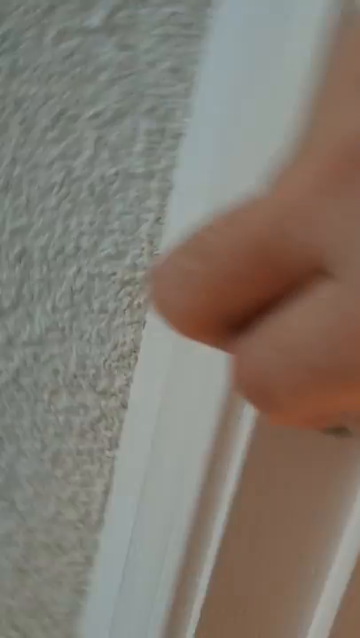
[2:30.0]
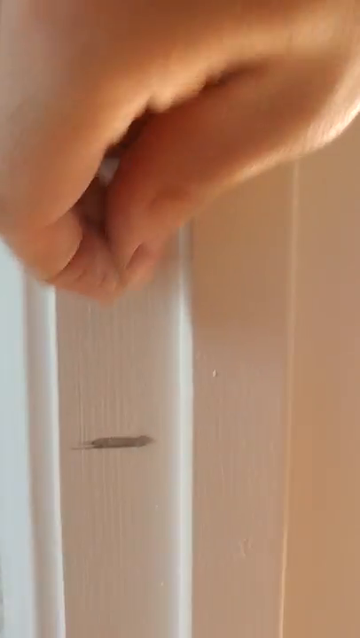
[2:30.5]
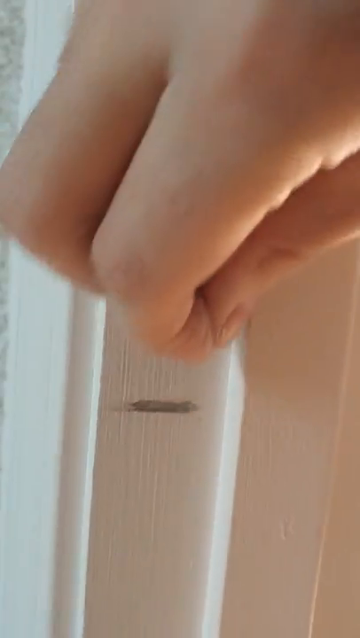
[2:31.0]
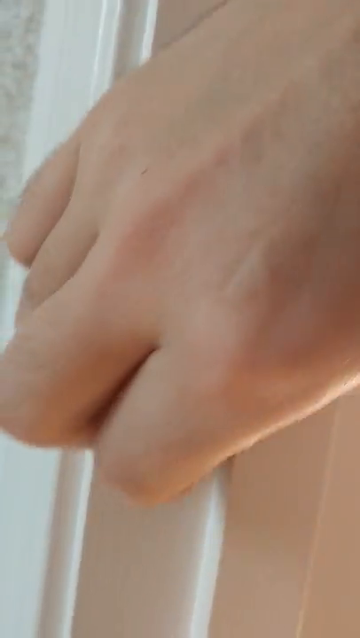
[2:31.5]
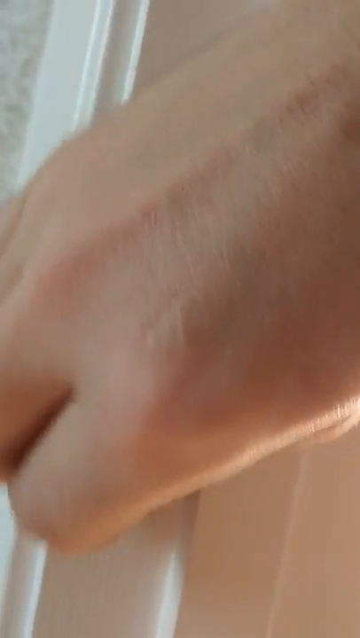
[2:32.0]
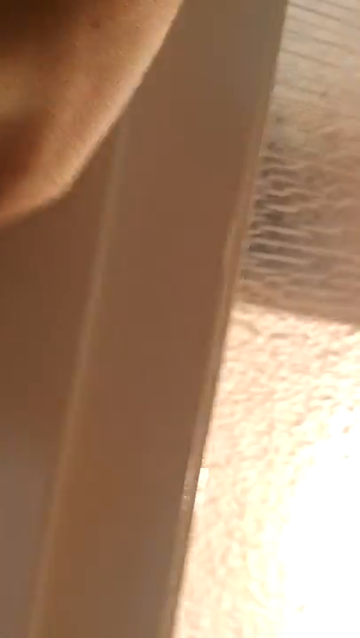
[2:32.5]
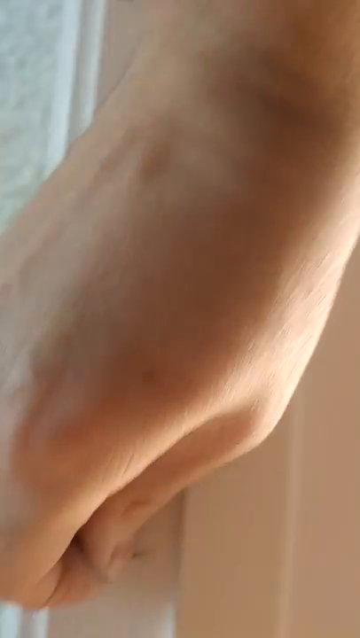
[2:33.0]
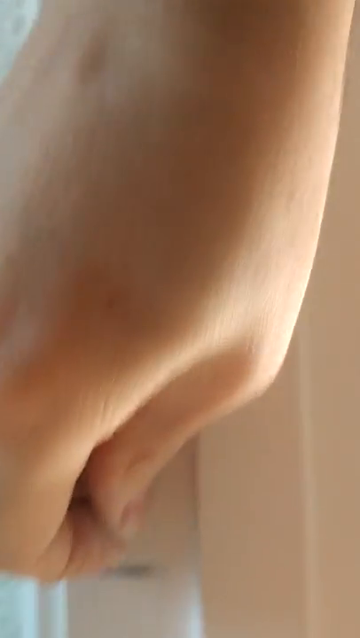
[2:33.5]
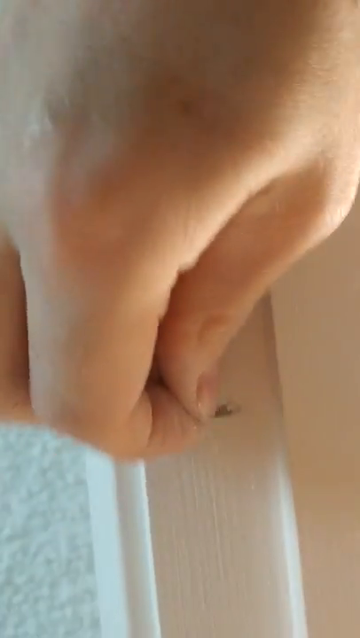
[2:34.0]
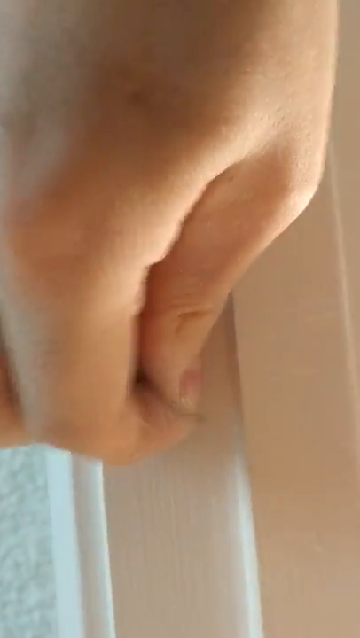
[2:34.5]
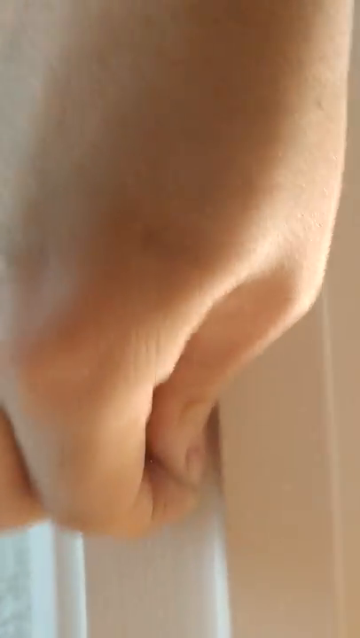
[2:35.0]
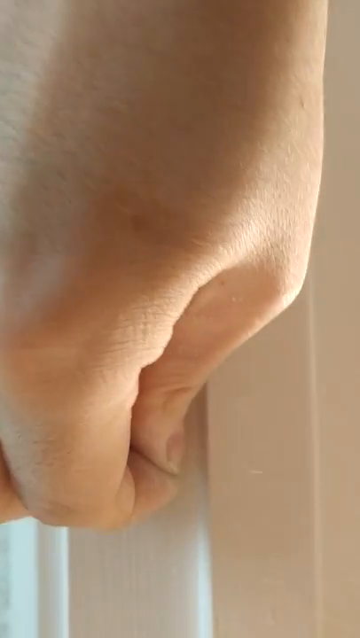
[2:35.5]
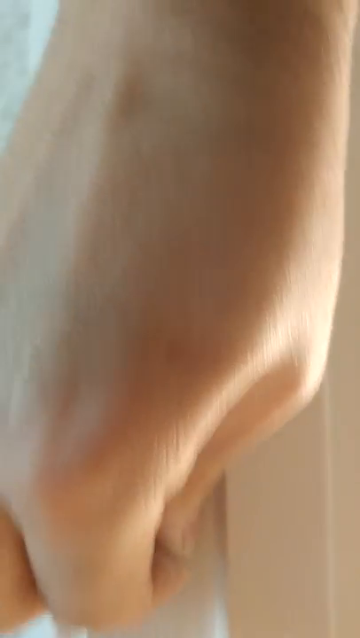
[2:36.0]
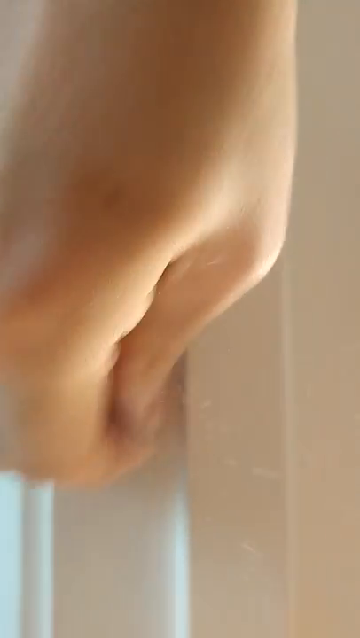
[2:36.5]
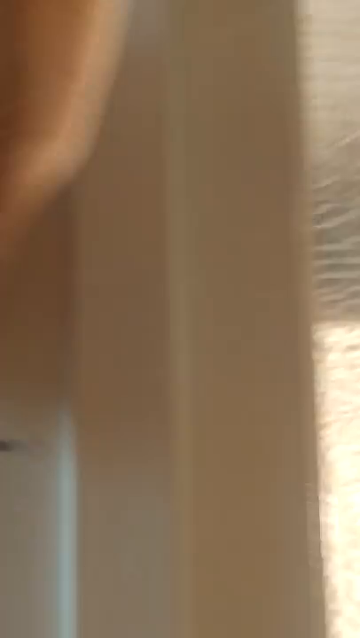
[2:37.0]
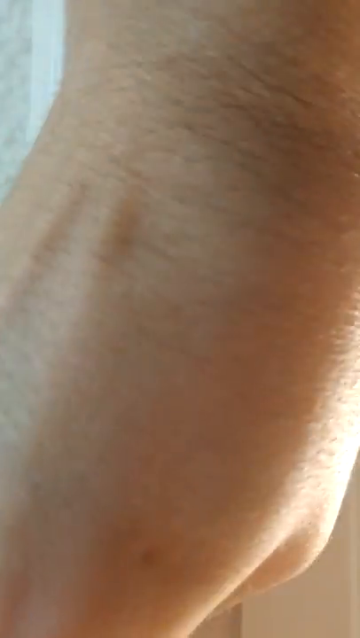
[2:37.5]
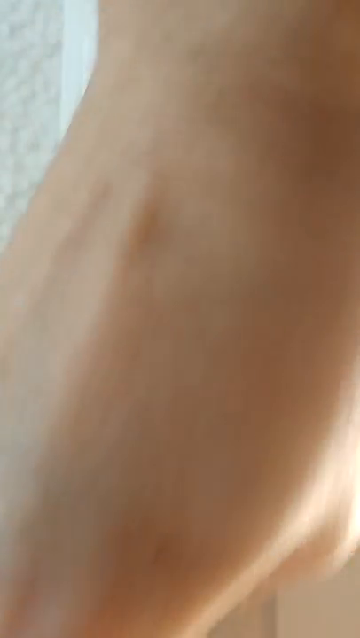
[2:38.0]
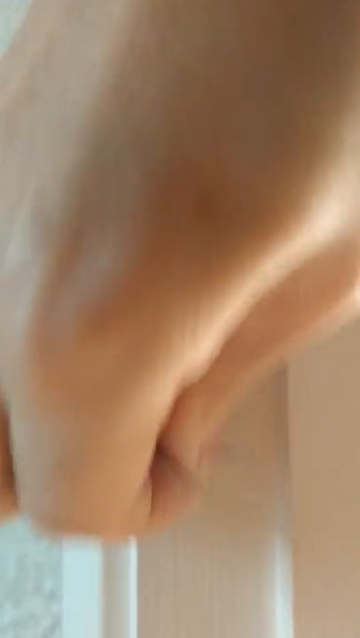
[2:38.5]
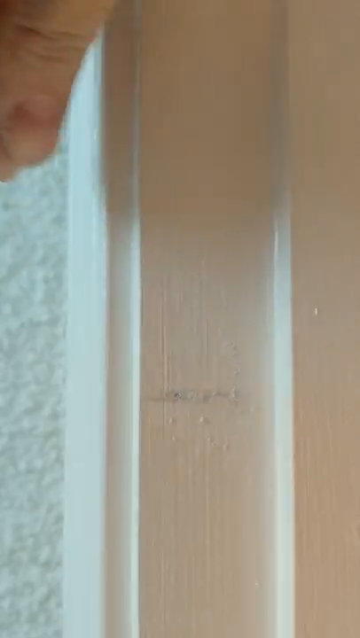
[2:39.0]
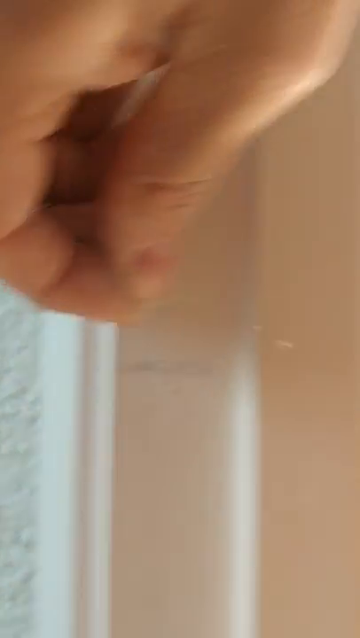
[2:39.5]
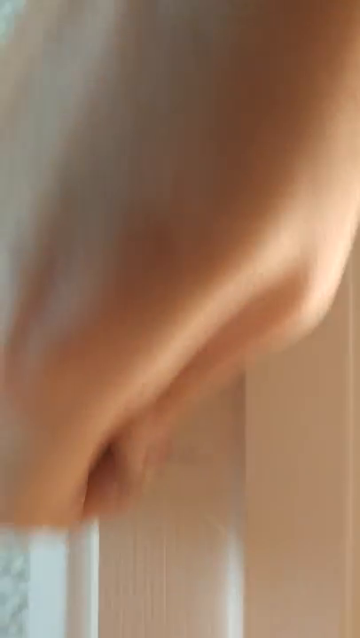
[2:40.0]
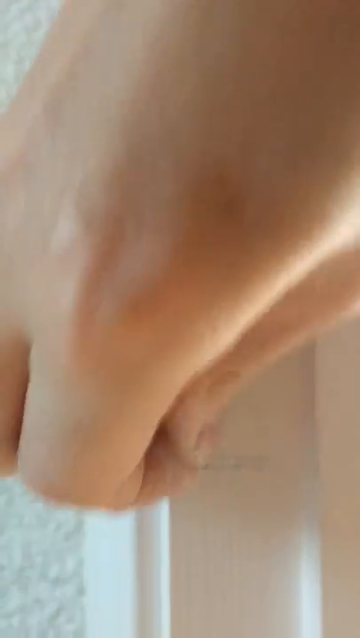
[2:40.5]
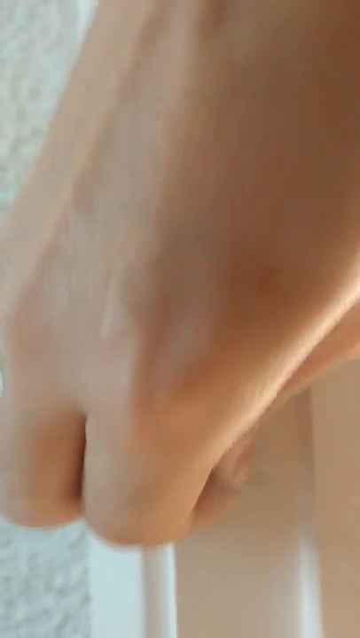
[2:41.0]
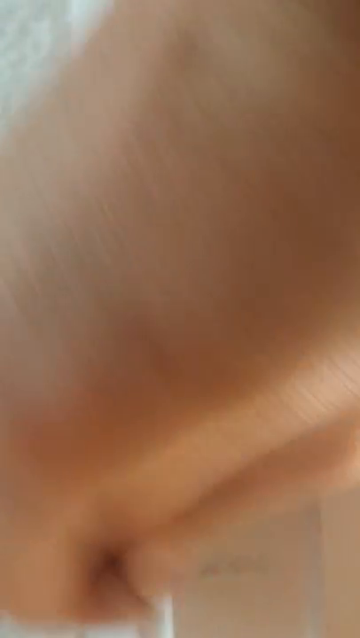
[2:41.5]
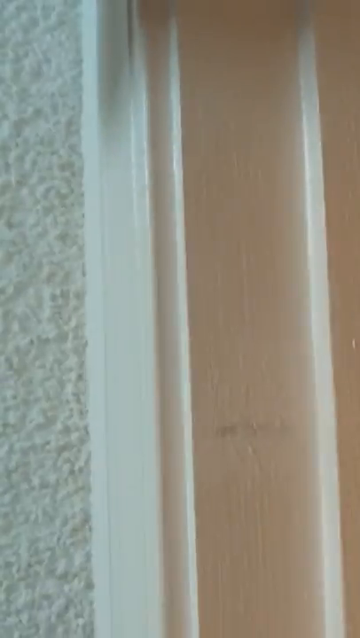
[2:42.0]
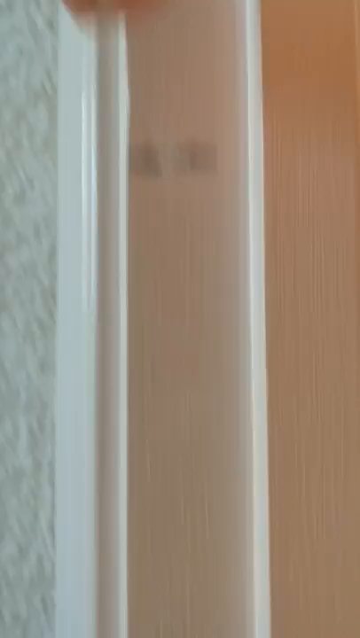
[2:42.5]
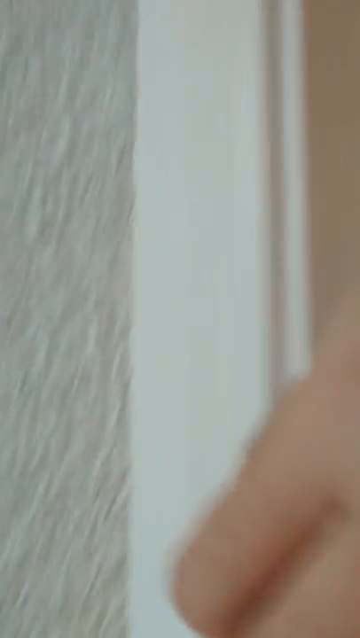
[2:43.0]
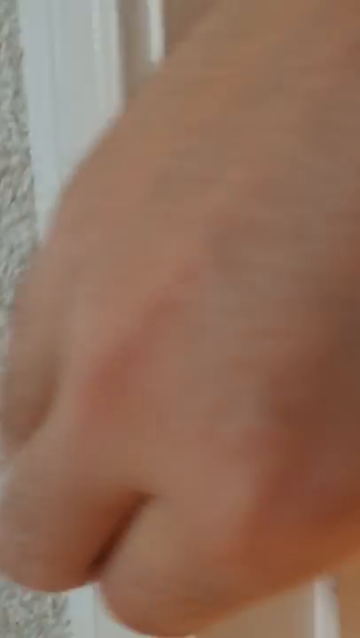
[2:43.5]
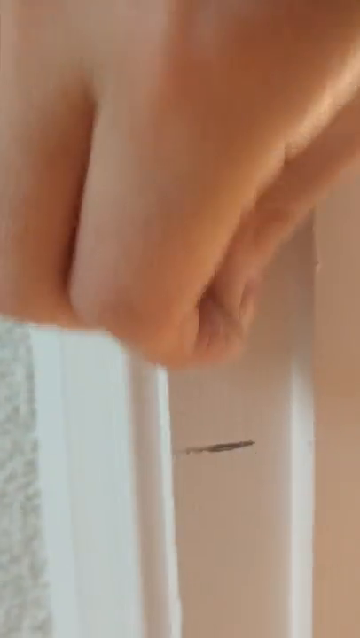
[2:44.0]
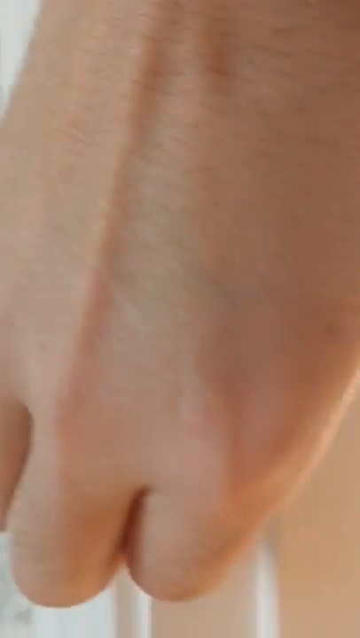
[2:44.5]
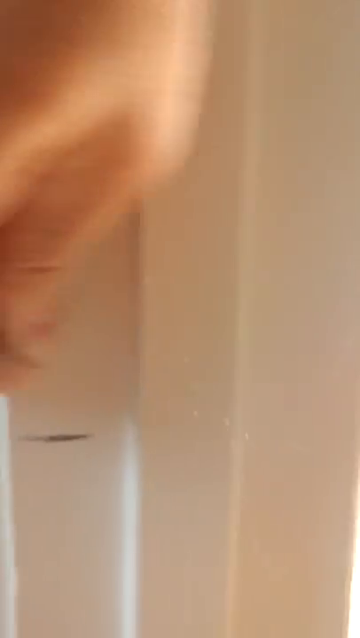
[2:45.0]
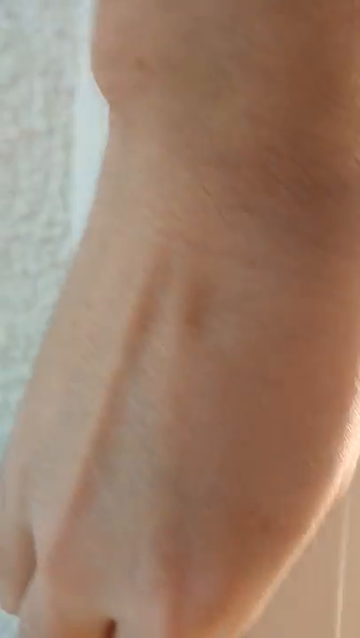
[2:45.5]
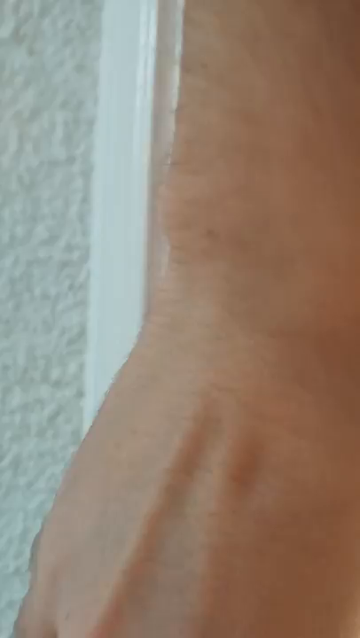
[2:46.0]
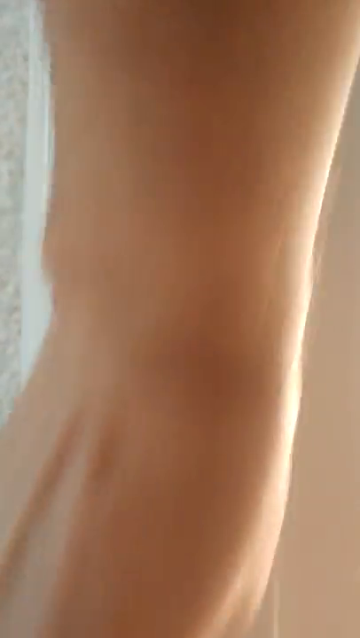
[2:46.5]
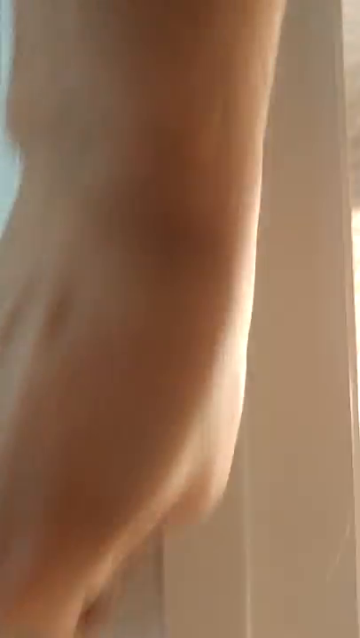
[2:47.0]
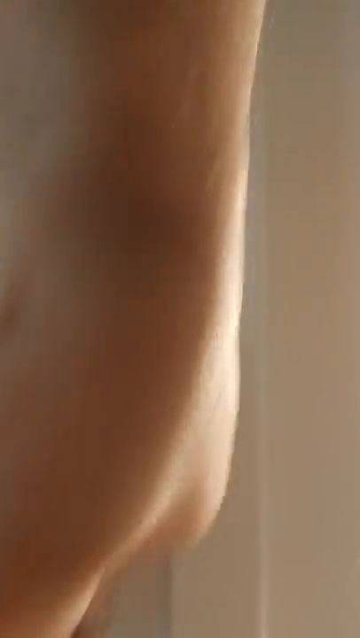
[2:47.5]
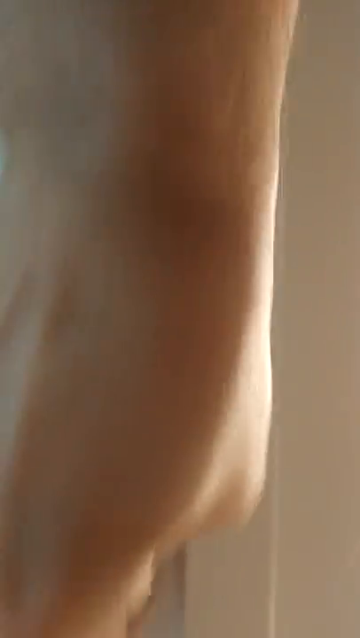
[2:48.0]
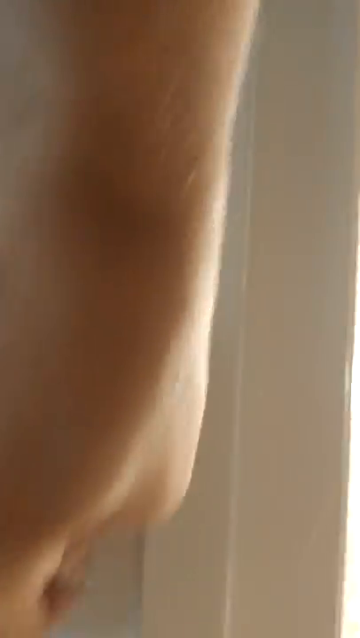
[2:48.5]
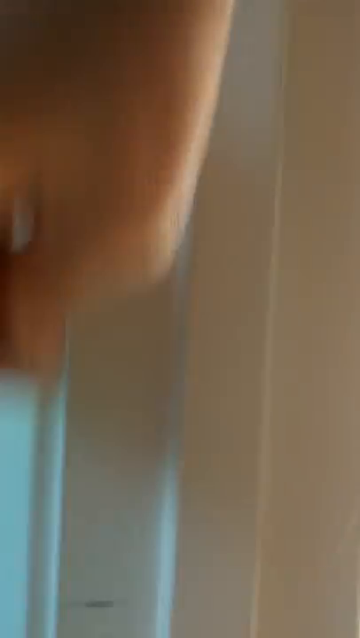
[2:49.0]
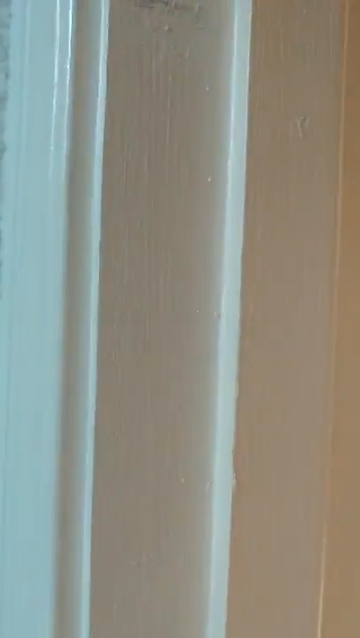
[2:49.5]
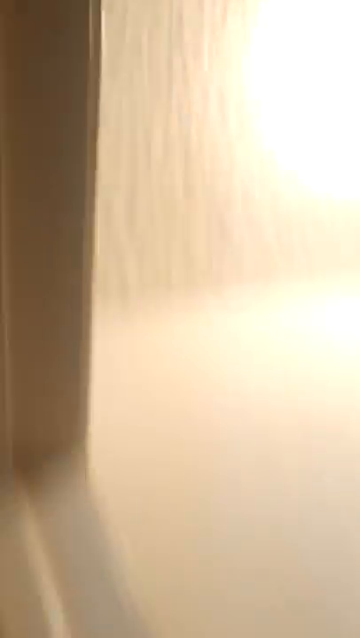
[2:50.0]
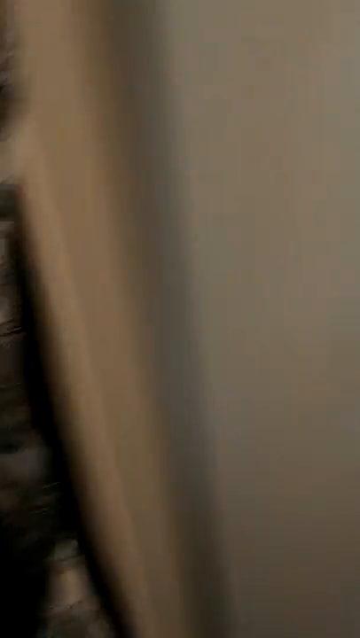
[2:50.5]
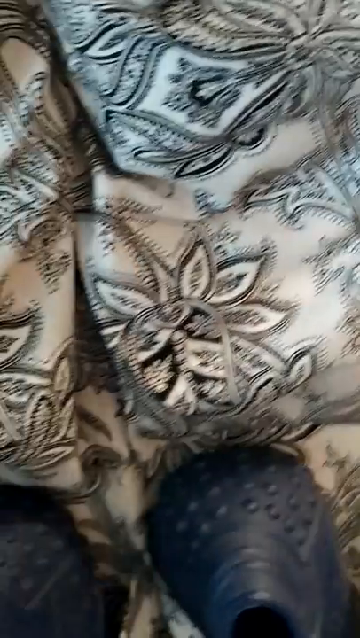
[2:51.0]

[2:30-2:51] A close-up shows what looks like a door jamb and a man's hand. The man has found a scratch in the door jamb and rubs chalk into it to try to cover it up, which semi-hides it temporarily. He finds another scratch no more than a foot up from the first one in the door jamb and rubs at it with chalk too. The scratches are still visible, but the chalk helps a little. During the video, his piece of chalk gets kind of short and then gets long again.